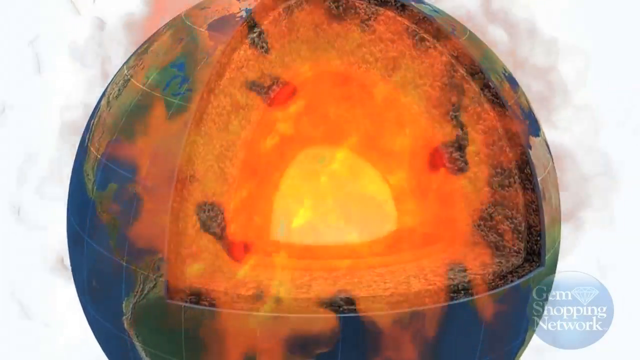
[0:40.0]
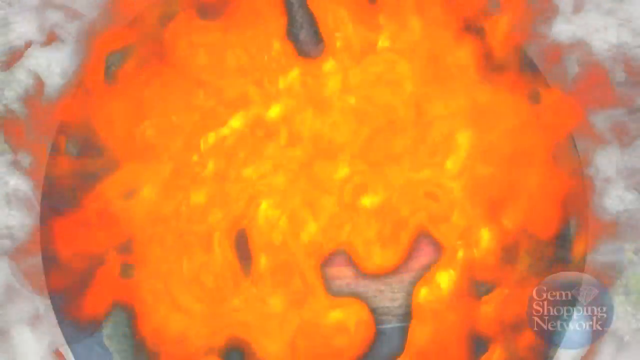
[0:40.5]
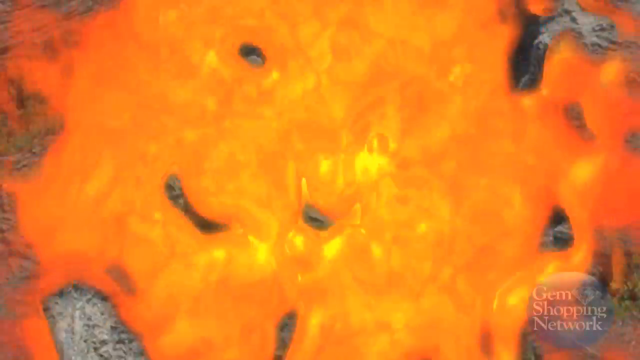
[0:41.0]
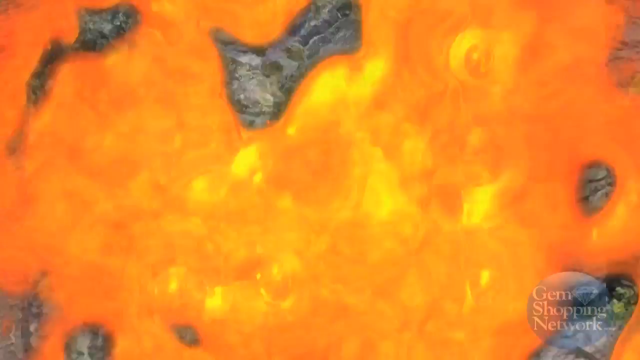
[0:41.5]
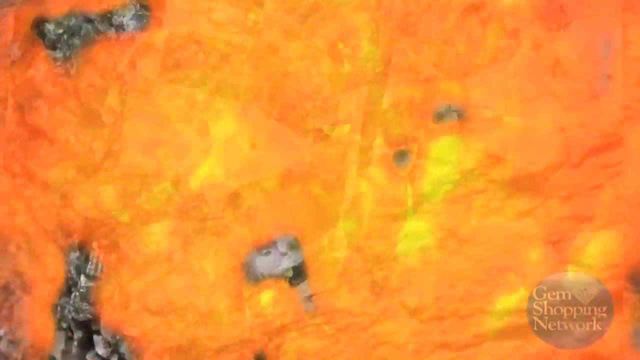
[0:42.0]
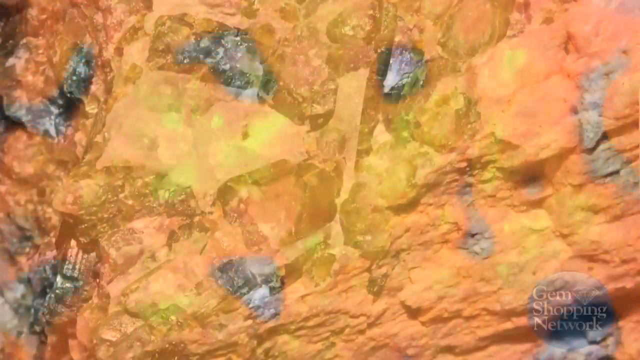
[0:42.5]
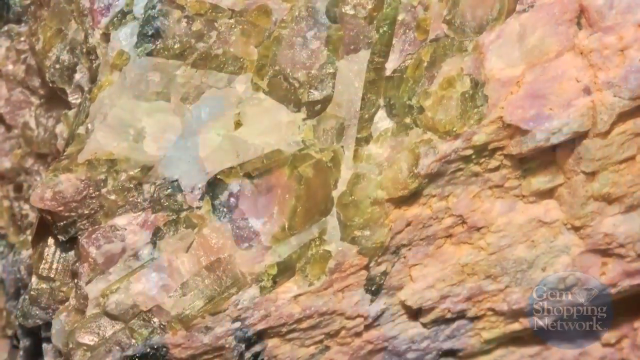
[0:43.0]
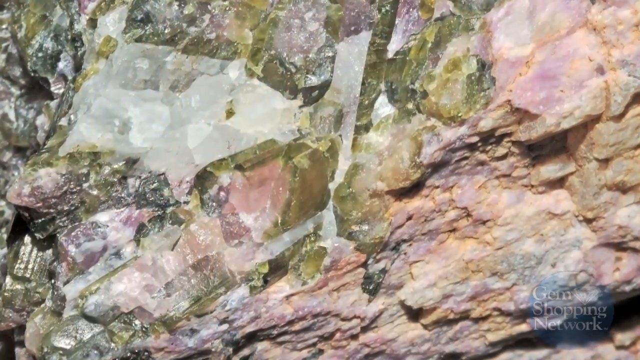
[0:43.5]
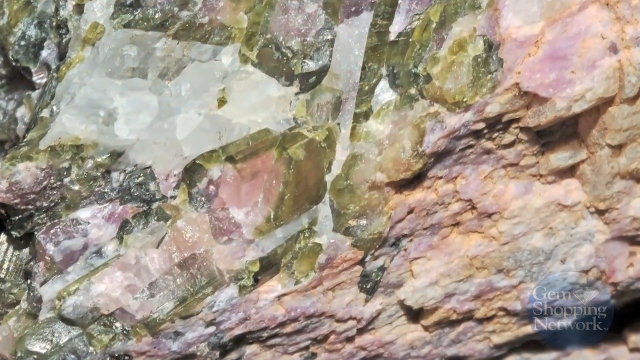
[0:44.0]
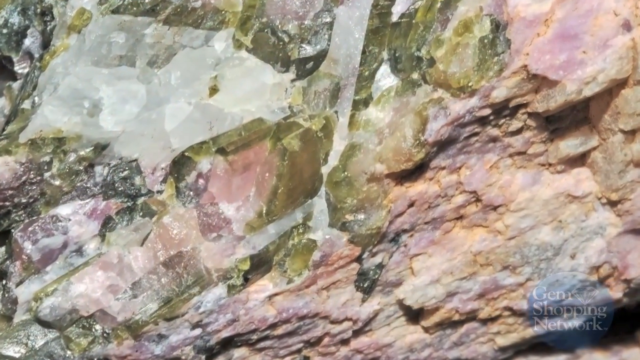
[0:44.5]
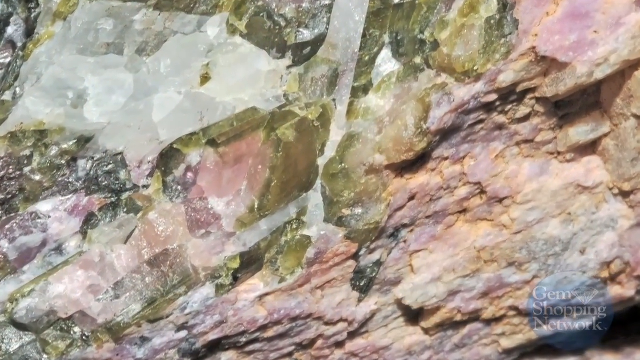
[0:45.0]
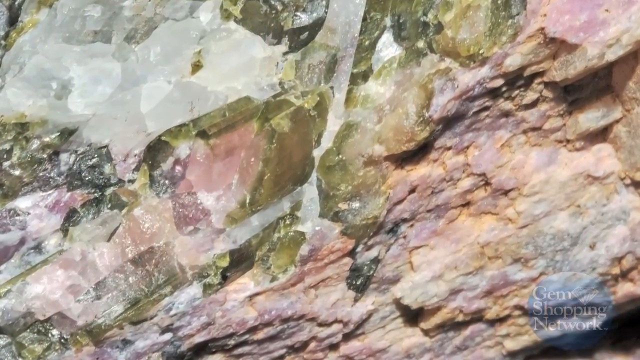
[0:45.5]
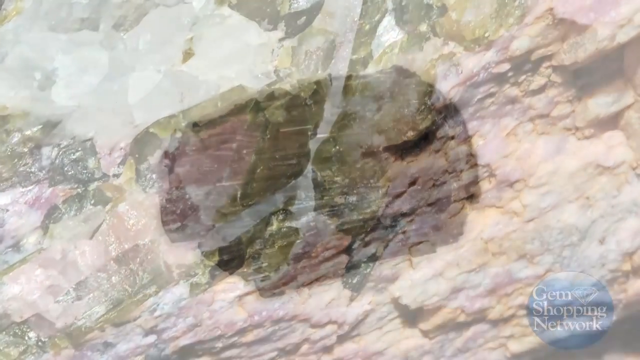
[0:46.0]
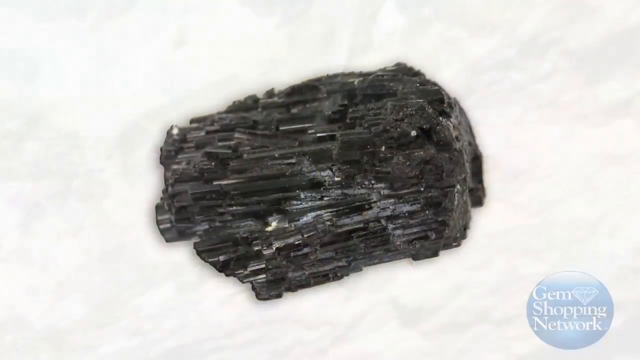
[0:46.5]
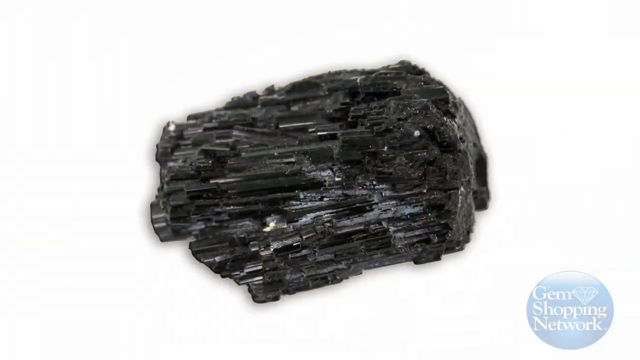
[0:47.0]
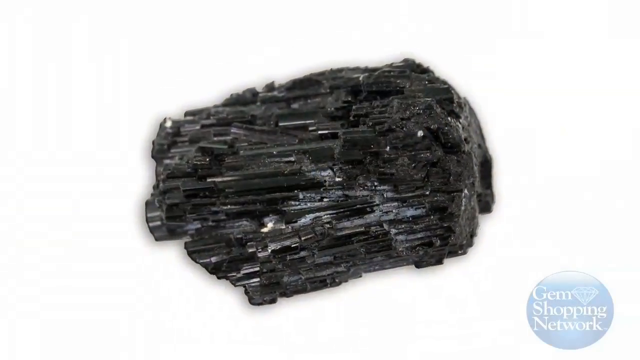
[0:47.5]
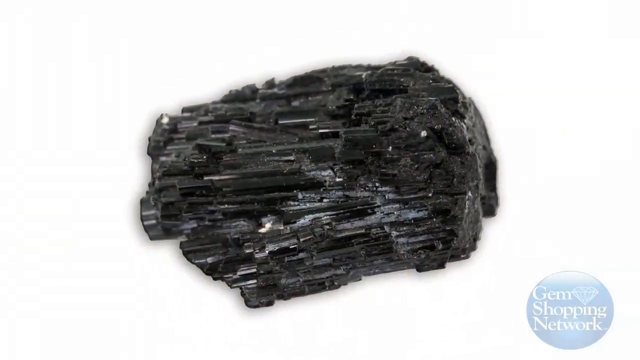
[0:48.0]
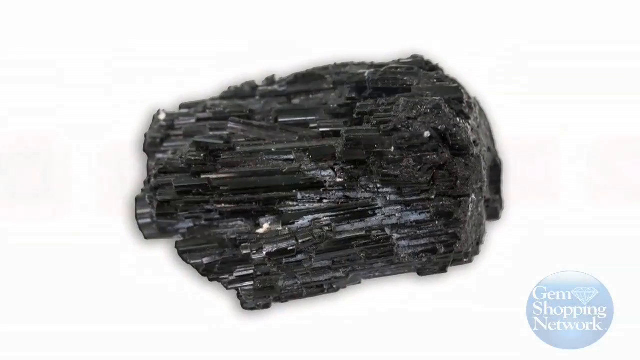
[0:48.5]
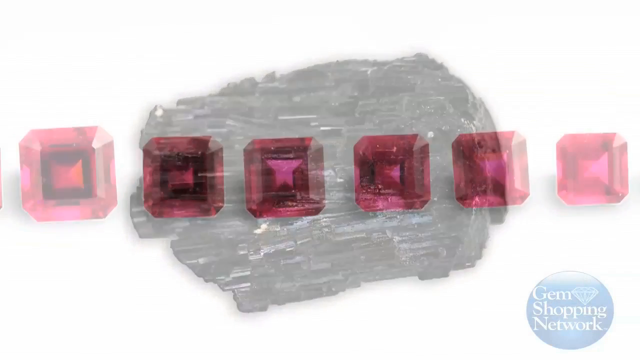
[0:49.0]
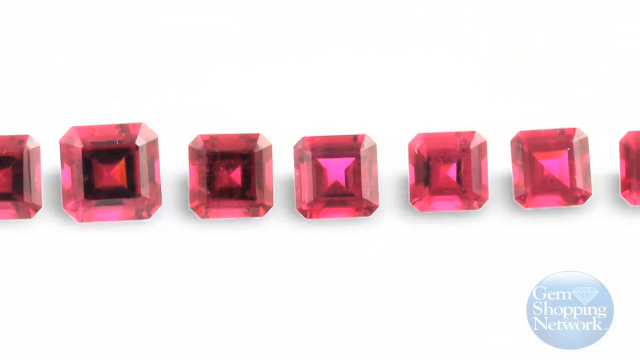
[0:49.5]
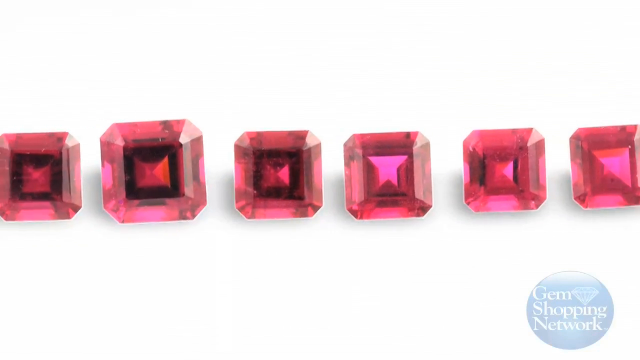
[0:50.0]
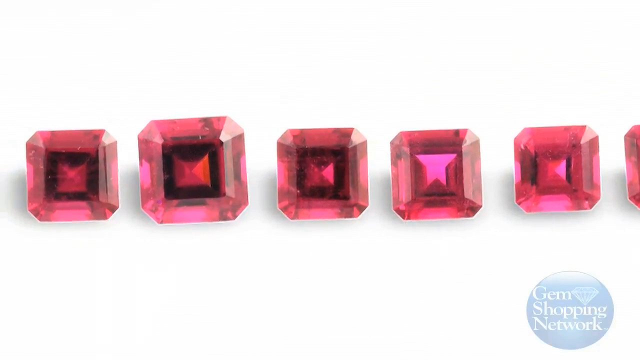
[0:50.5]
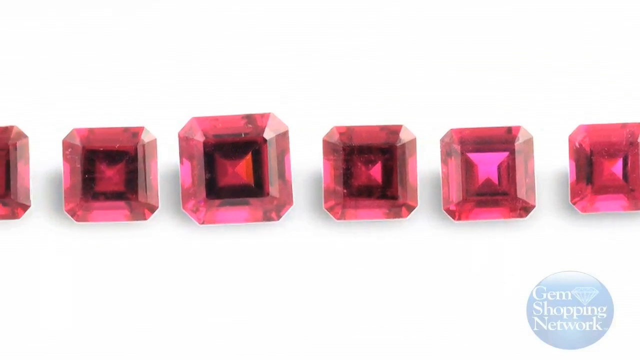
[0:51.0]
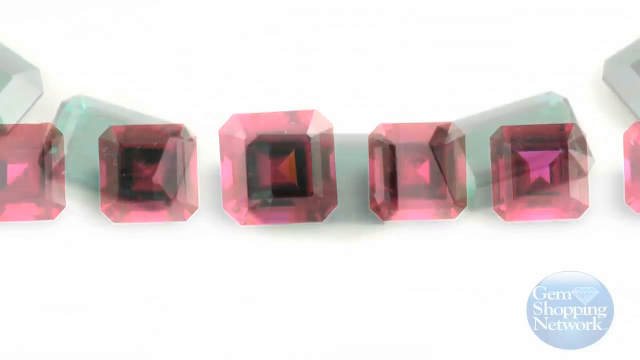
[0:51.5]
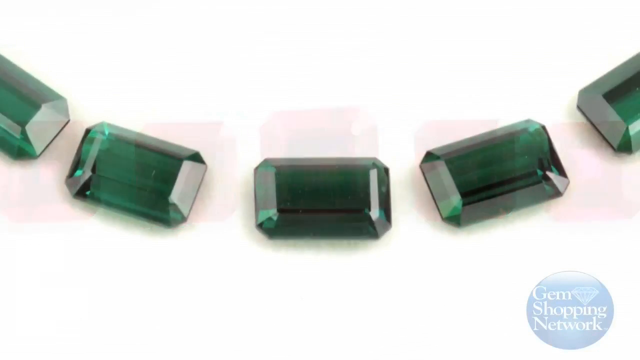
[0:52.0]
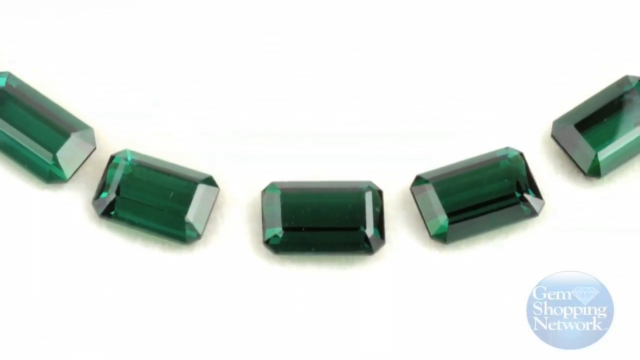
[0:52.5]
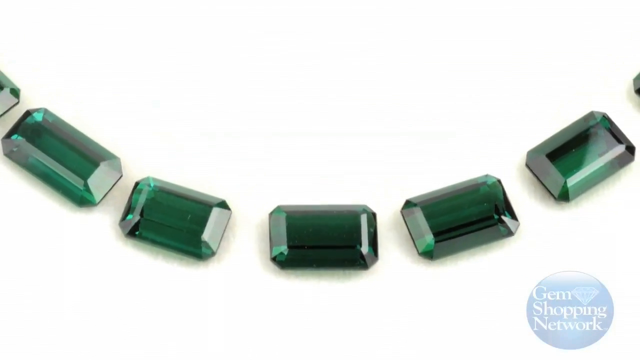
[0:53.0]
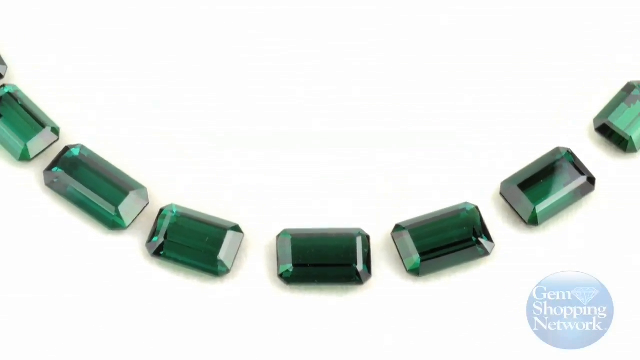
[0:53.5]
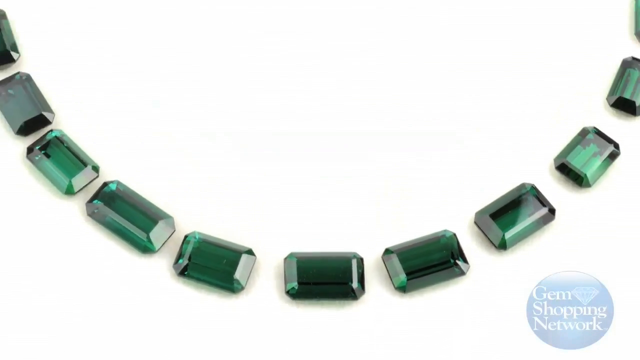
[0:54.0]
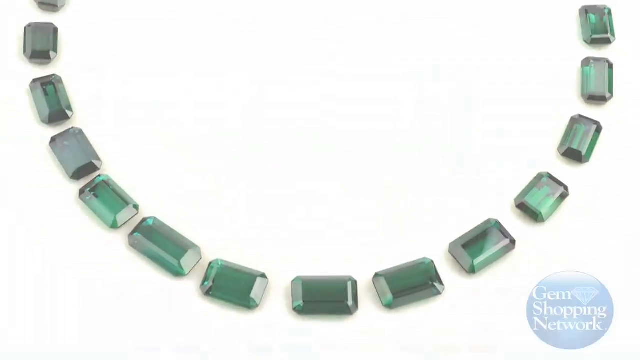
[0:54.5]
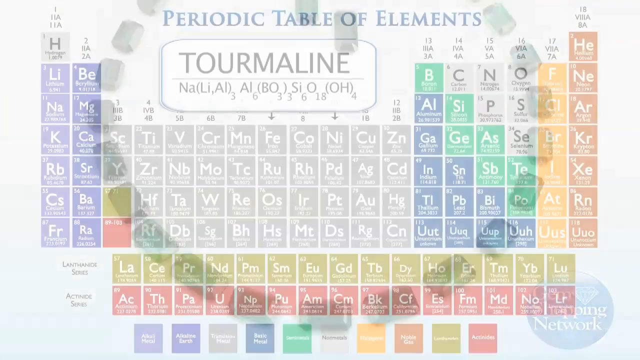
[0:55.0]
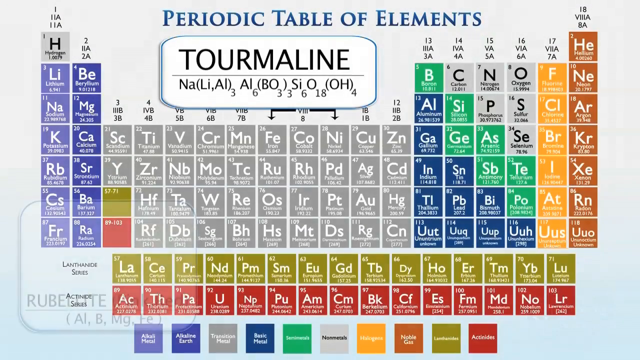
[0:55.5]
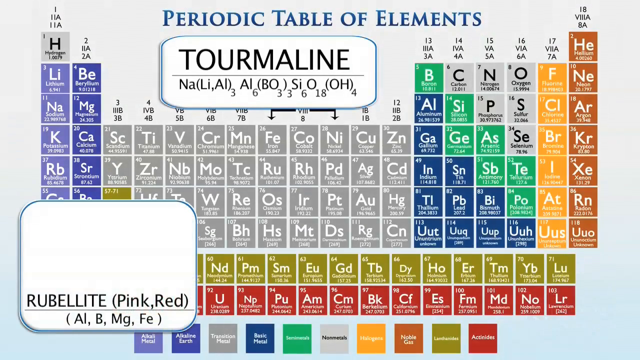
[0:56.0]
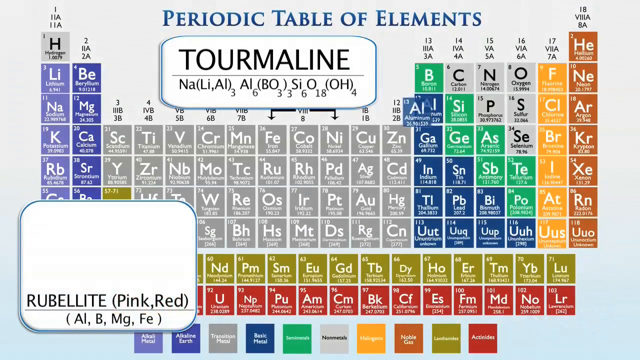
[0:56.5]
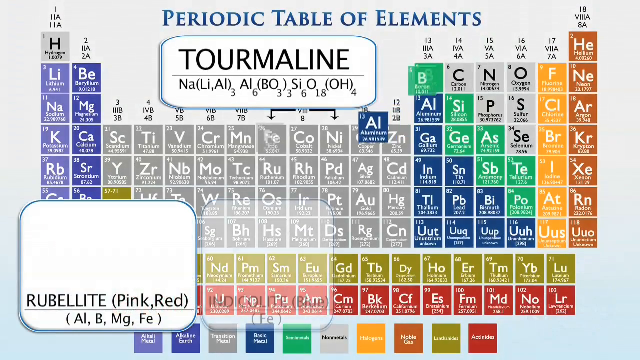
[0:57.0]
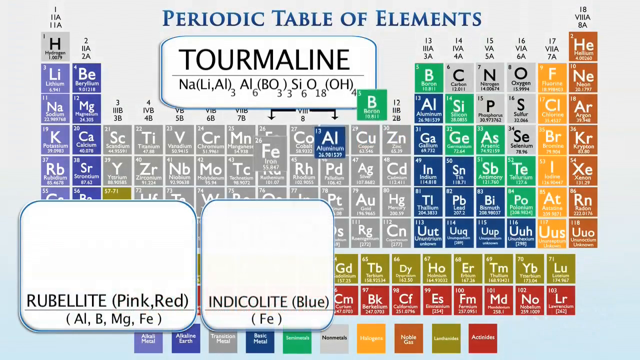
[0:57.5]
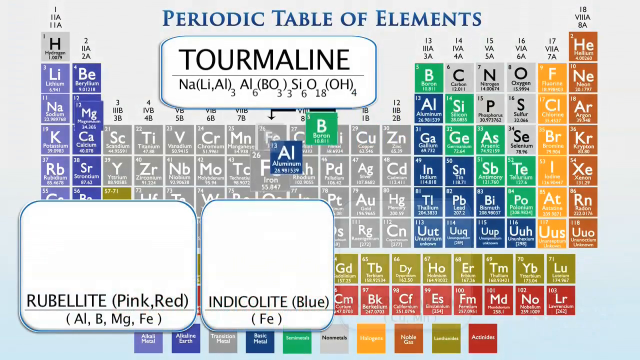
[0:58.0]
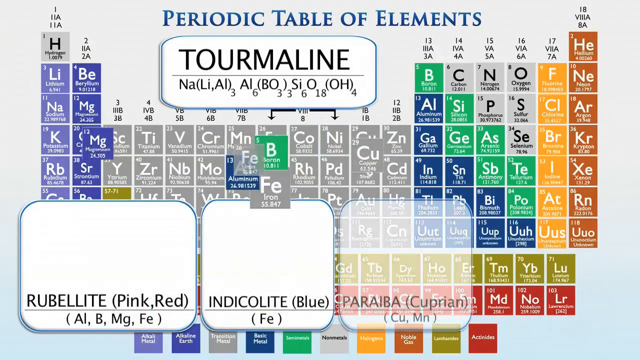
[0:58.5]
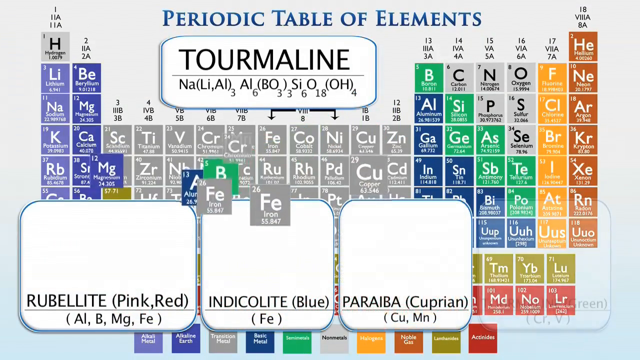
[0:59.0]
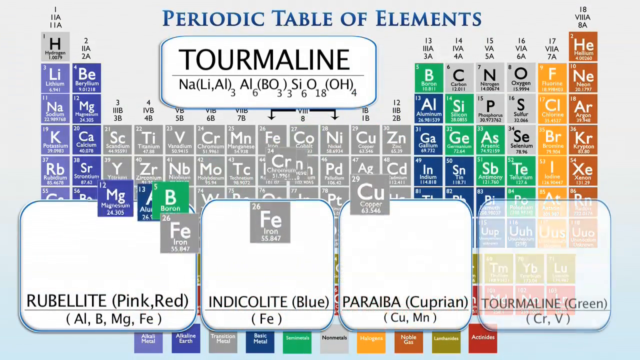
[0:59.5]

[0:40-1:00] A cross-section of the earth shows the different crust levels and the molten core. Lava splashes at the screen as a segue into the next scene, which shows a large chunk of some variety of unpolished gemstones. A very shiny black gemstone appears, then a red gemstone, possibly in a princess cut or square cut, and then some emerald-colored gemstones arranged in a circle. Next comes the periodic table of the elements, showing the chemical makeup of tourmaline and all its different components; the stones shown earlier are apparently tourmaline.